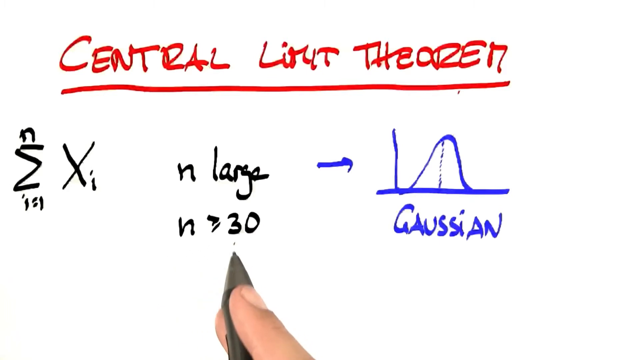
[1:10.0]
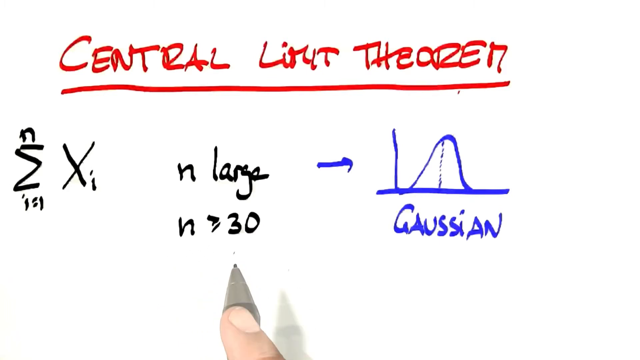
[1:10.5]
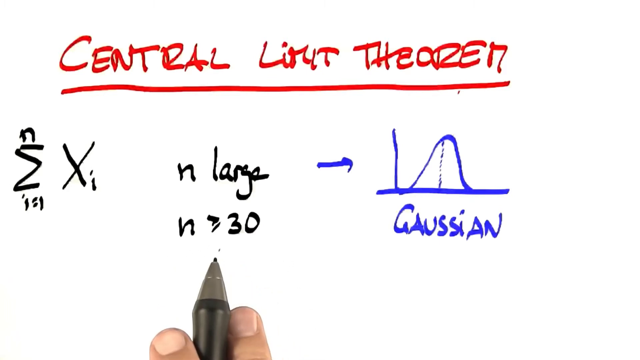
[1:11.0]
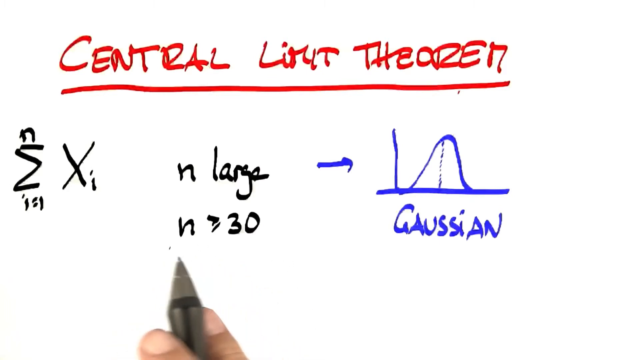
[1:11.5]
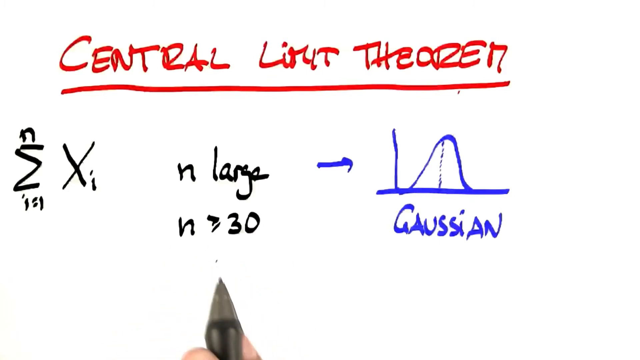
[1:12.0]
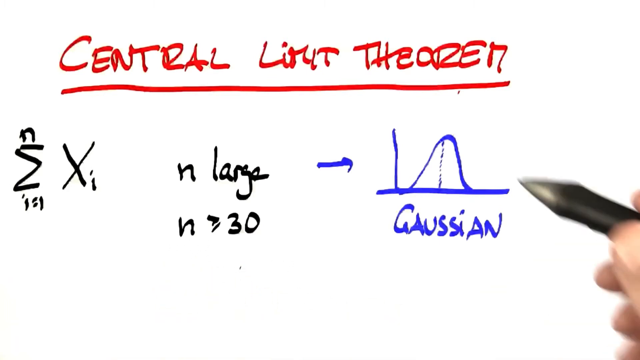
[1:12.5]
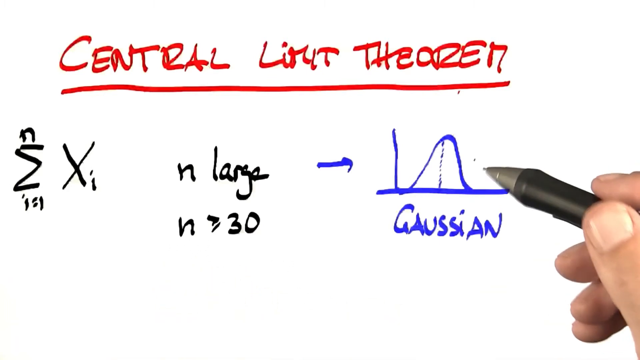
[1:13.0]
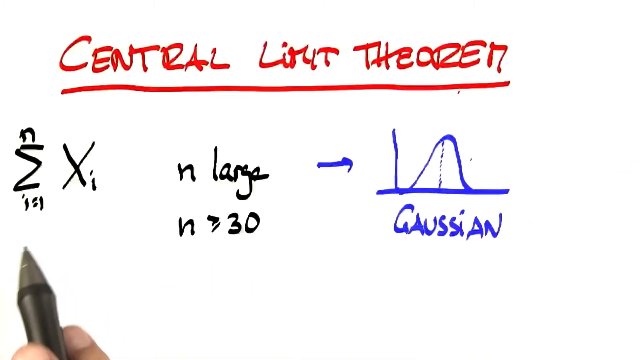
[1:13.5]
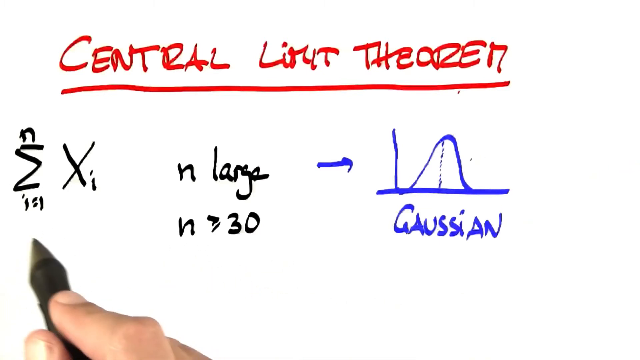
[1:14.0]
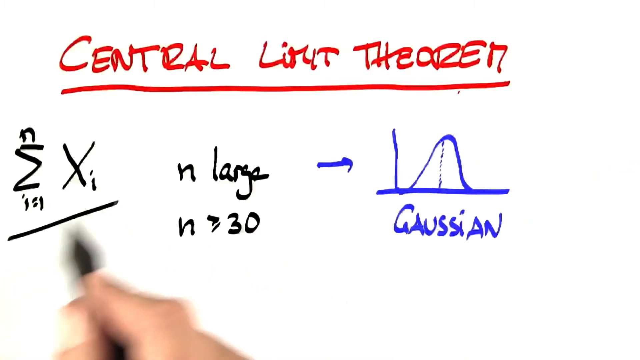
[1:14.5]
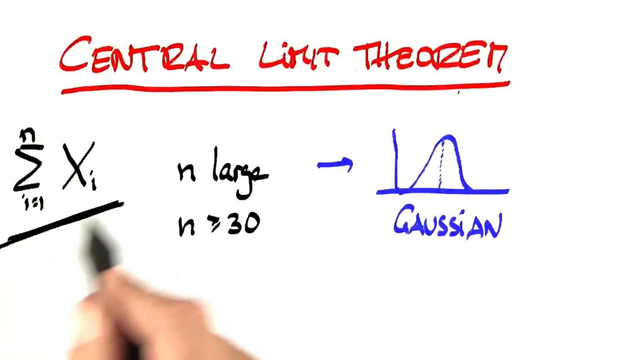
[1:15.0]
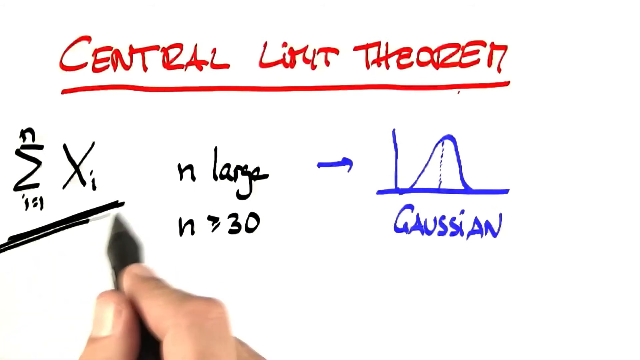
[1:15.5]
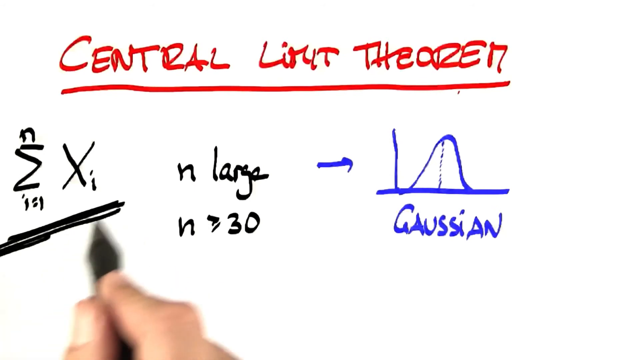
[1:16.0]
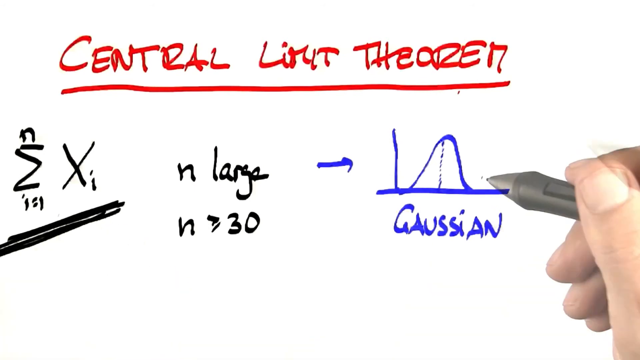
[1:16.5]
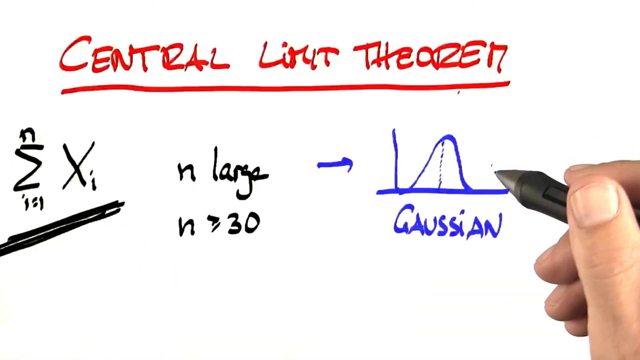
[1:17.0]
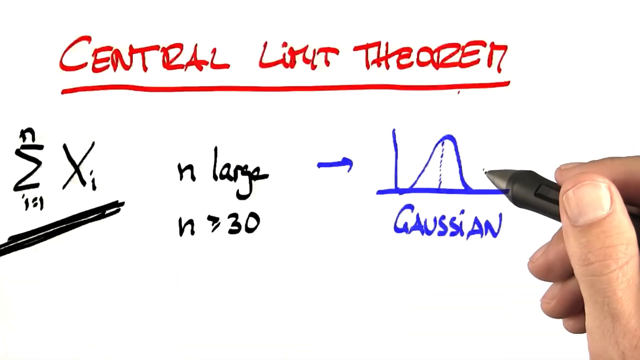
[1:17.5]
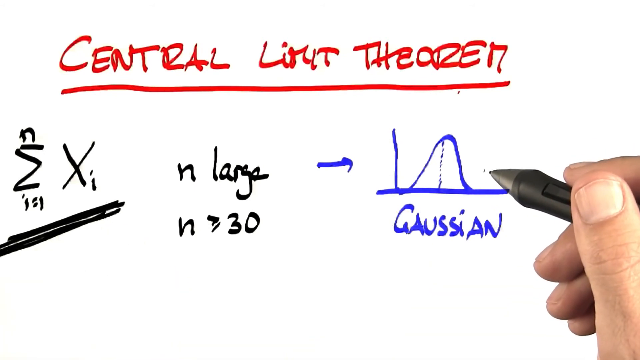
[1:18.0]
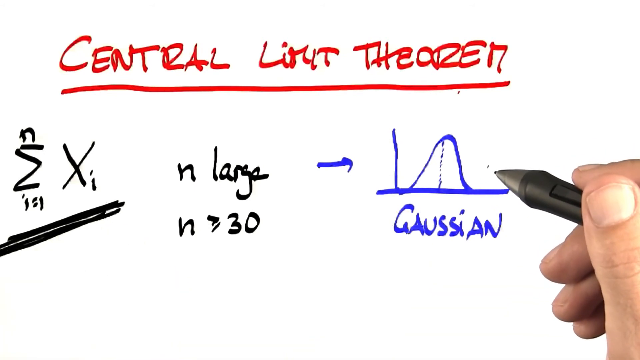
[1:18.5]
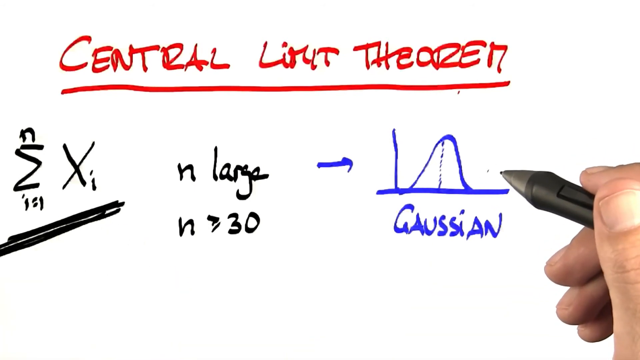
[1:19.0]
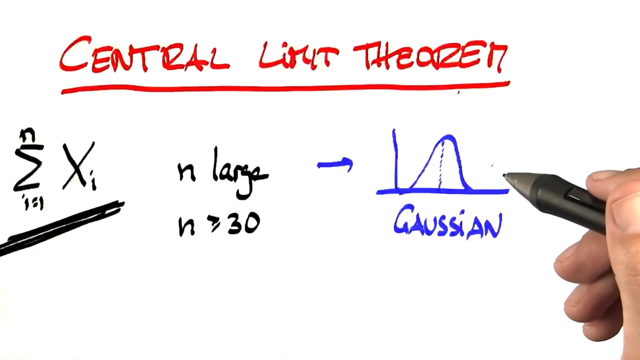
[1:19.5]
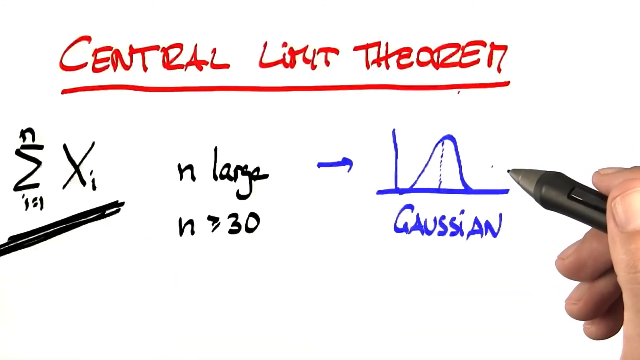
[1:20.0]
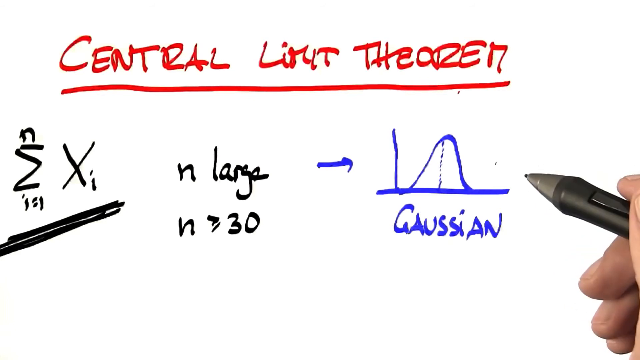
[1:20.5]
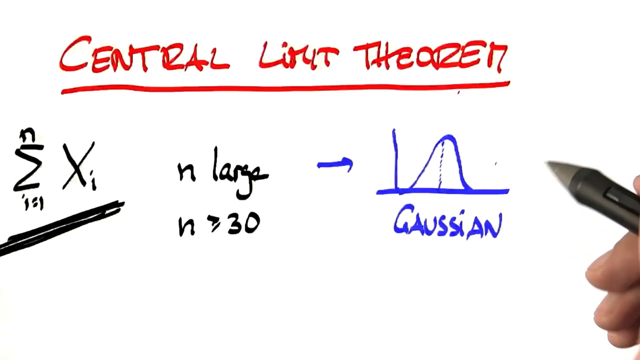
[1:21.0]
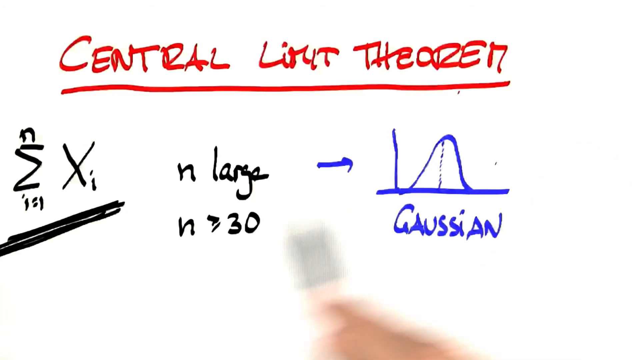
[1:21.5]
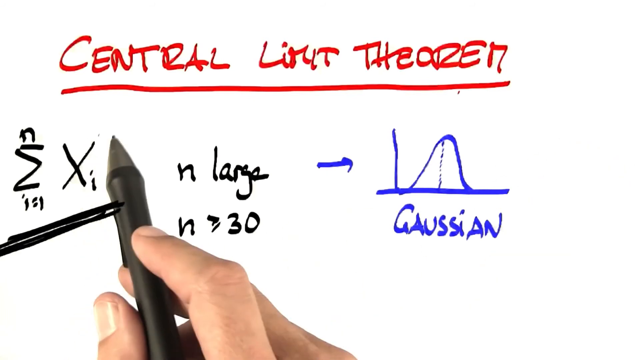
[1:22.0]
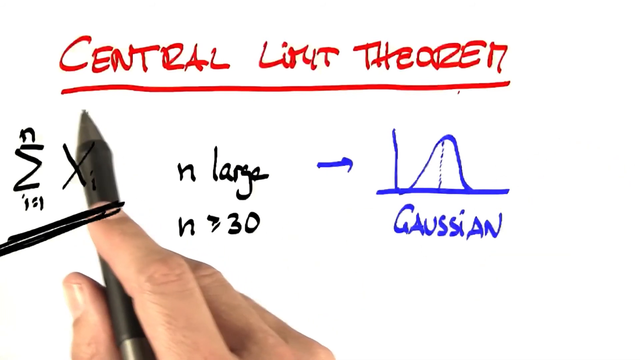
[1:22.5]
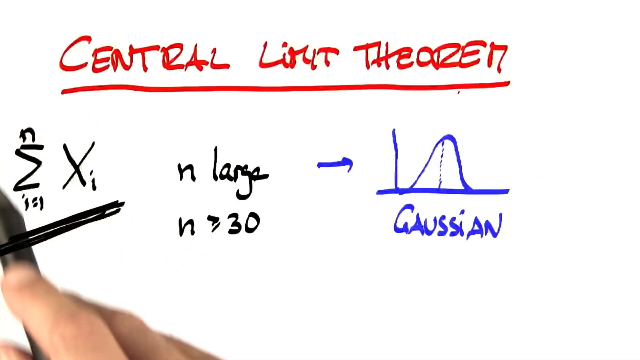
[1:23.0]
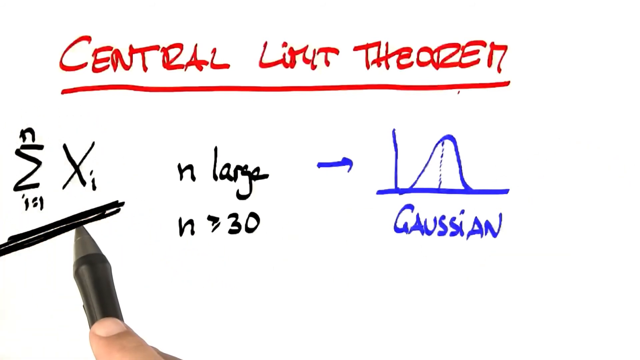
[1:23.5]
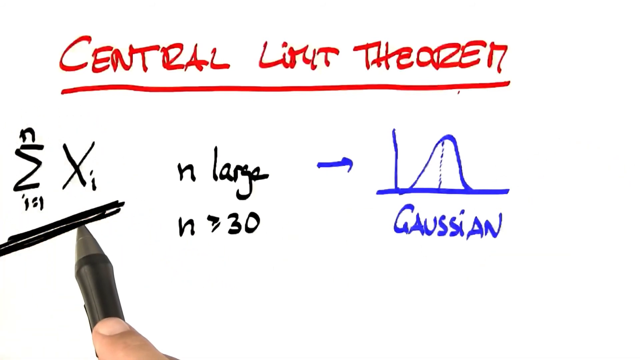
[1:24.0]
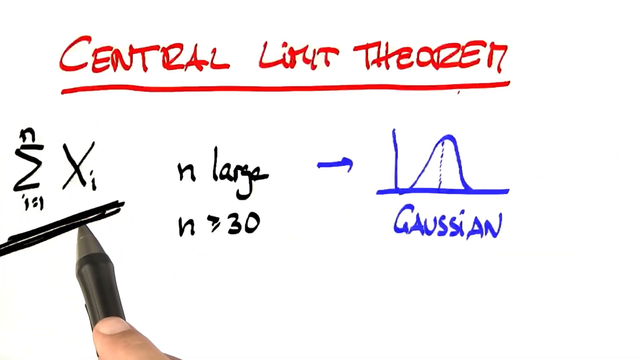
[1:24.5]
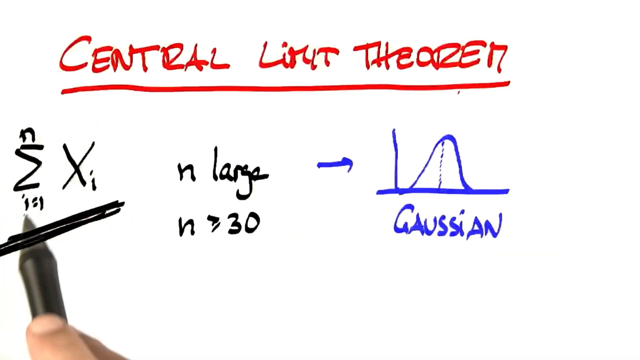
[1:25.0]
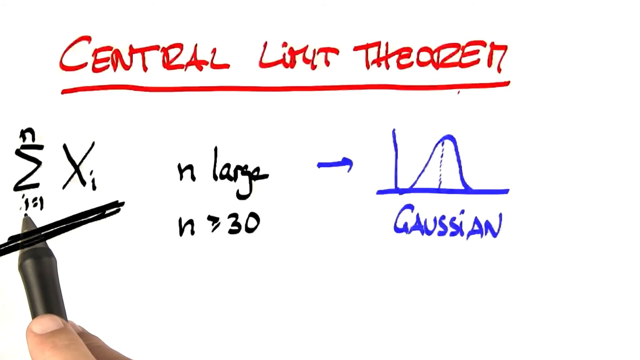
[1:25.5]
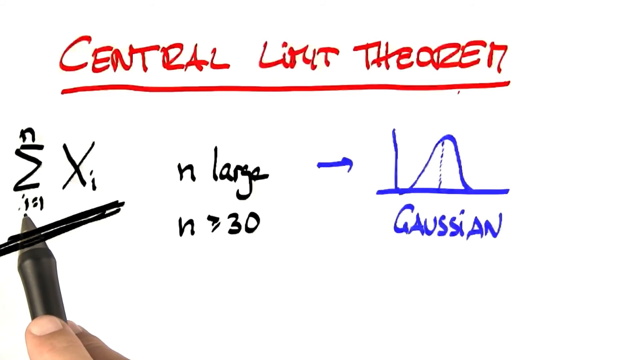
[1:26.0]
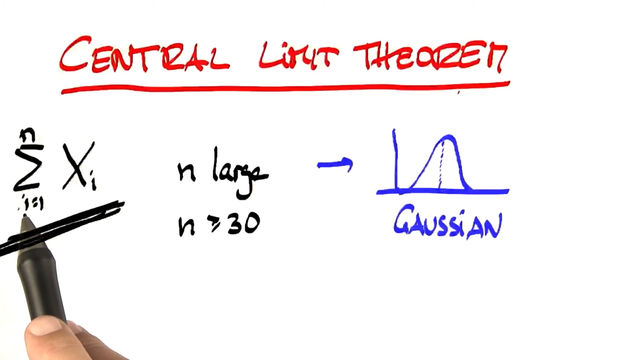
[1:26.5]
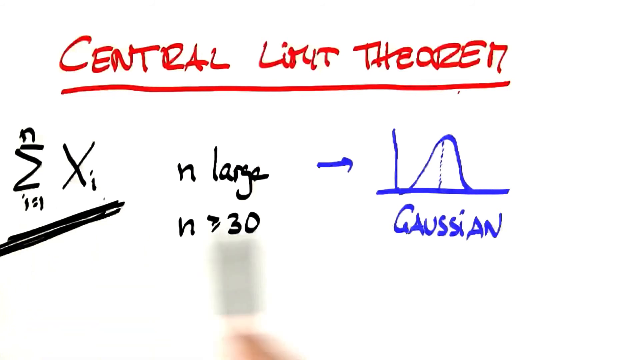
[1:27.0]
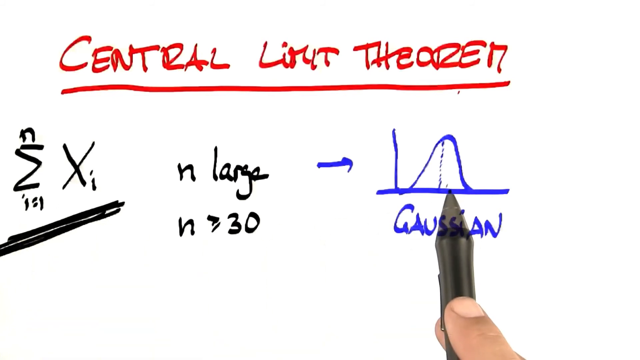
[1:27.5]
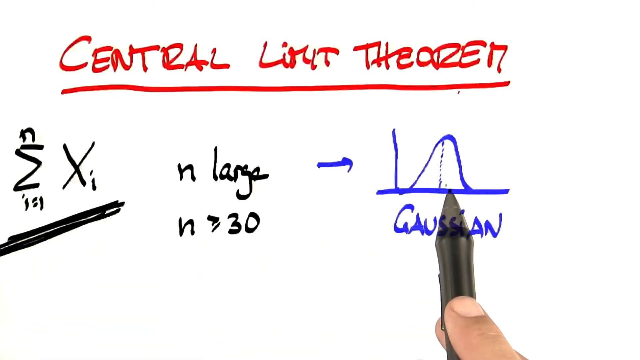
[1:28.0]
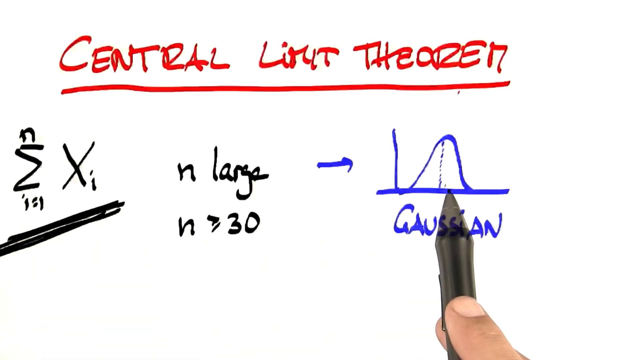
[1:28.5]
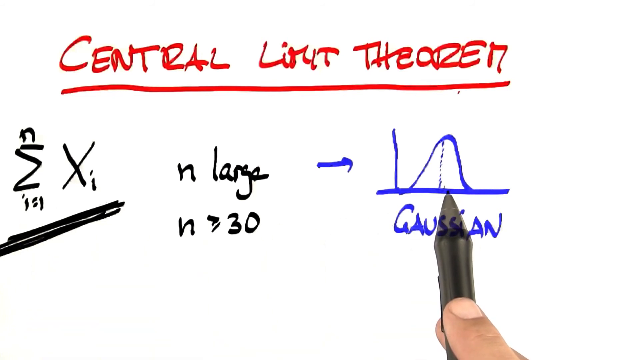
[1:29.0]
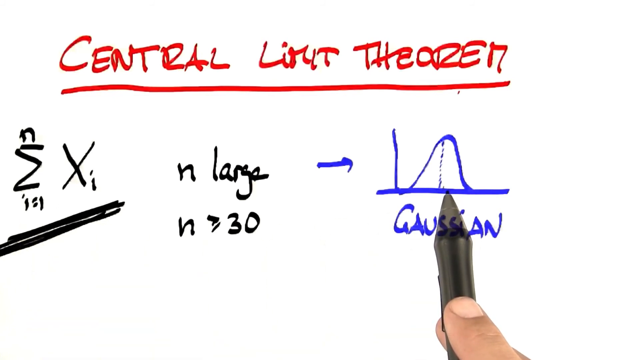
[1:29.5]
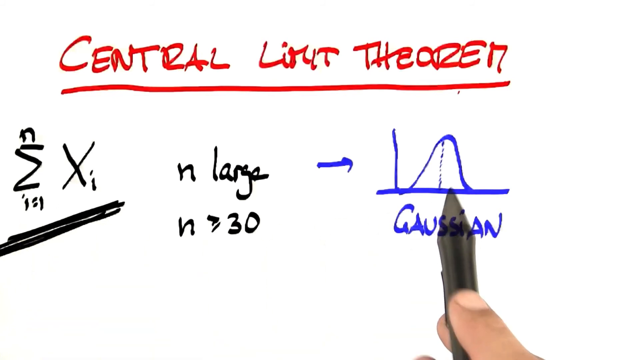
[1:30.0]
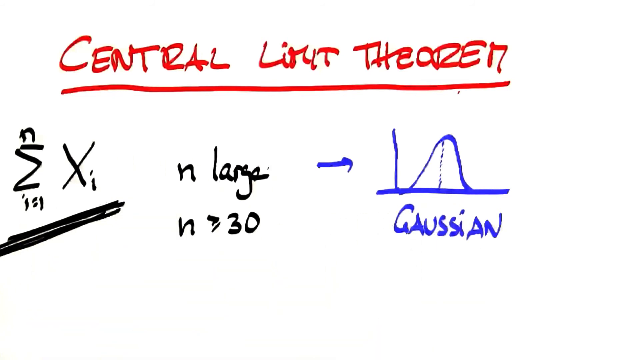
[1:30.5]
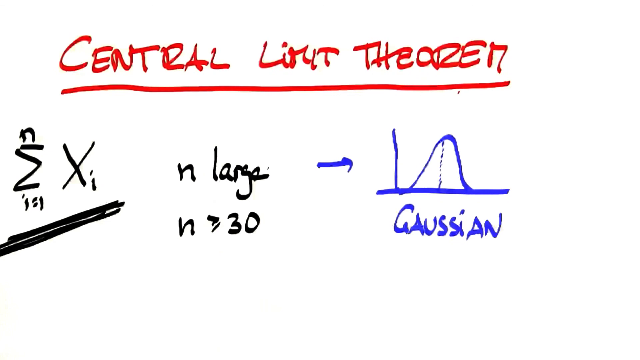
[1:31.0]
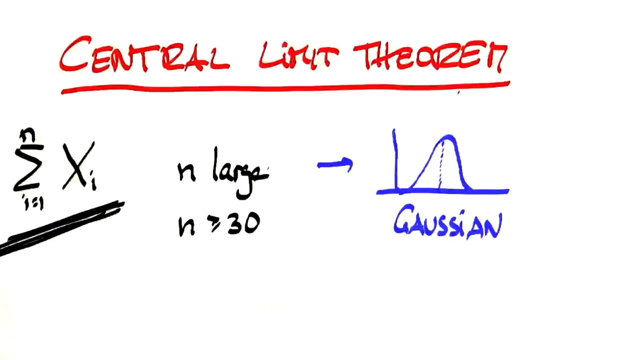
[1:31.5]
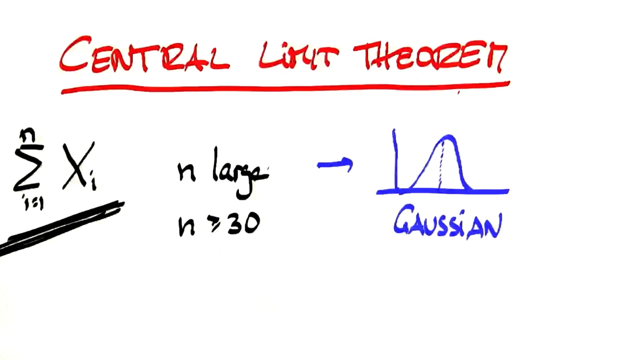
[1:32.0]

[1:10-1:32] On a white background, "central limit theorem" is handwritten across the center top in red block capital letters, underlined in red pen. On the left-hand side below it are an epsilon and a capital X with a small i next to it, with a small letter n above the epsilon and the equation "i = 1" below it. The center of the screen says "n large", and below that "n = 30", also in black pen. A blue arrow next to the word "large" points to the right, to the y and x axes of a graph on which a parabolic curve is drawn in blue ink. Underneath is the word "Gaussian" in blue block letters. Someone's right hand holding a pen moves around the screen, going back and forth among the three characters and pointing to one and then another. Underneath the epsilon Xi, it draws three heavy black diagonal lines running from the lower left toward the upper right.